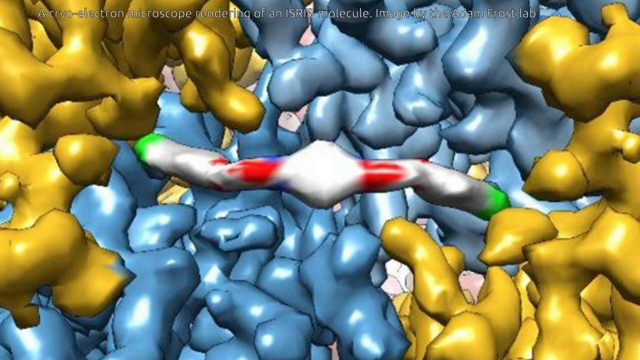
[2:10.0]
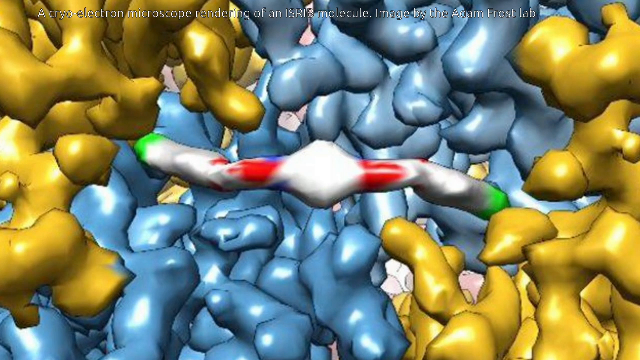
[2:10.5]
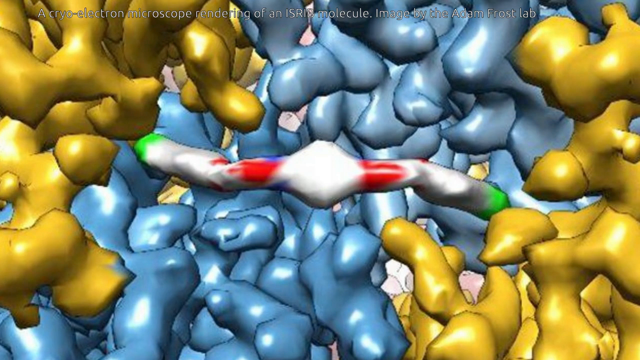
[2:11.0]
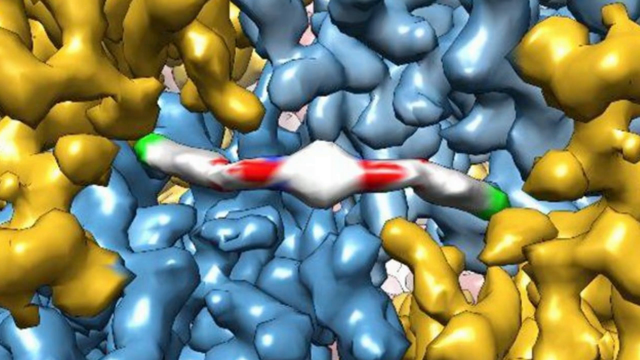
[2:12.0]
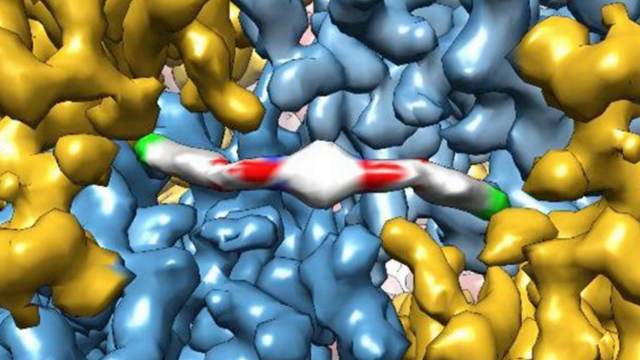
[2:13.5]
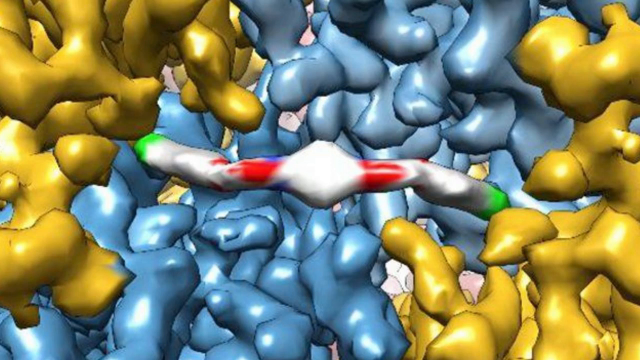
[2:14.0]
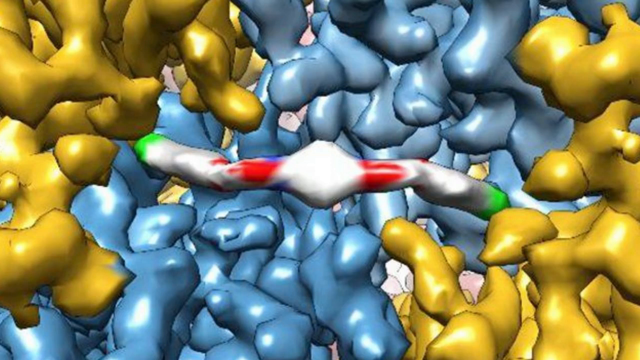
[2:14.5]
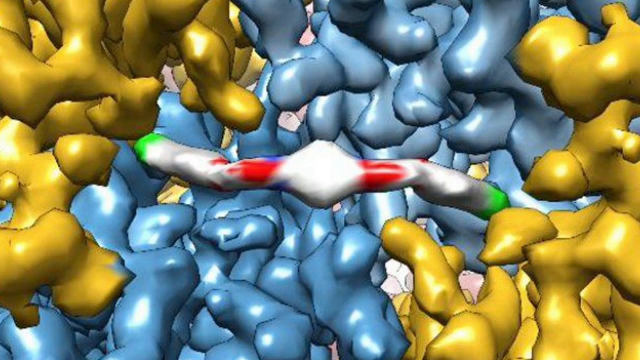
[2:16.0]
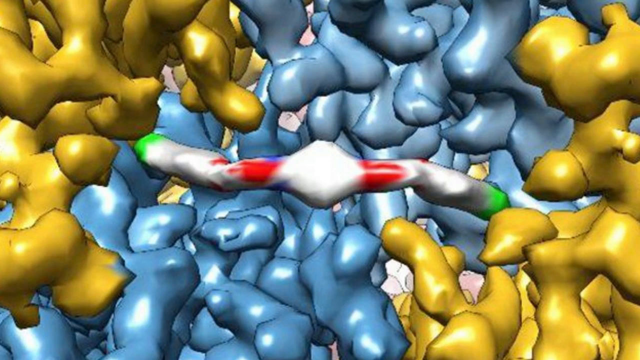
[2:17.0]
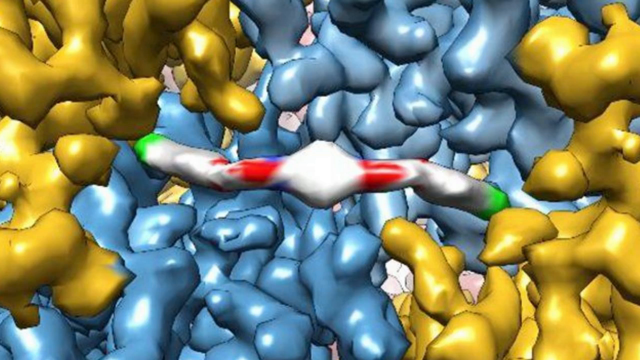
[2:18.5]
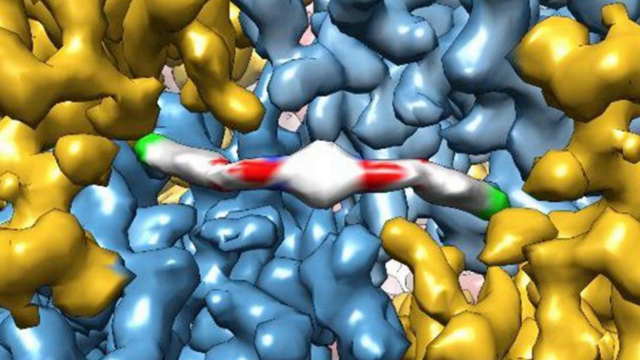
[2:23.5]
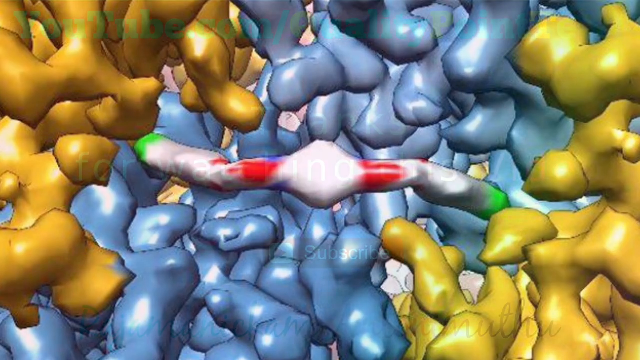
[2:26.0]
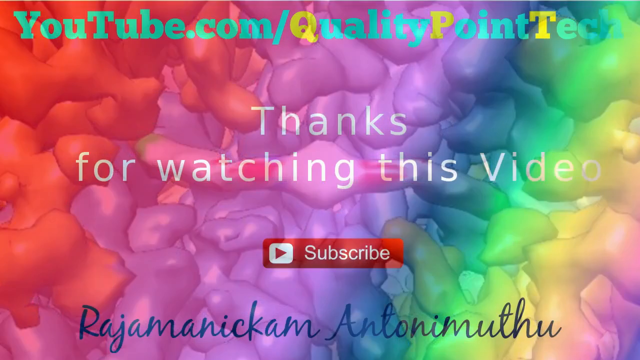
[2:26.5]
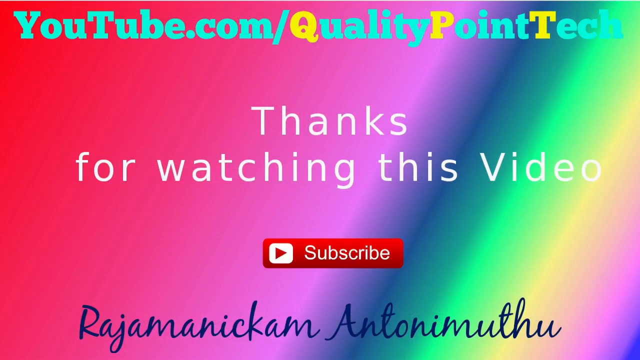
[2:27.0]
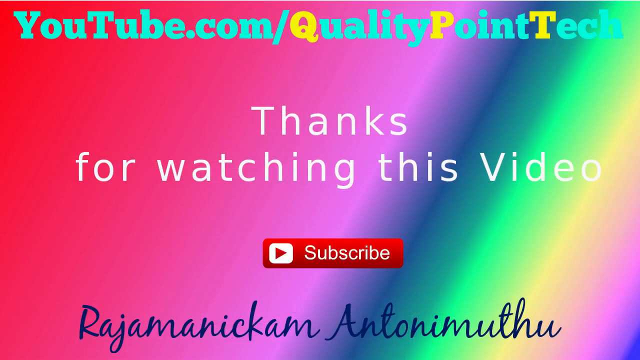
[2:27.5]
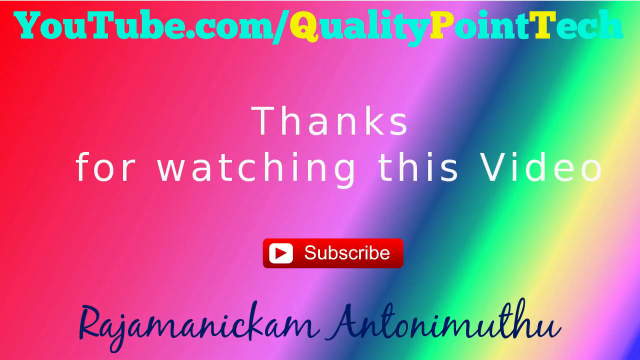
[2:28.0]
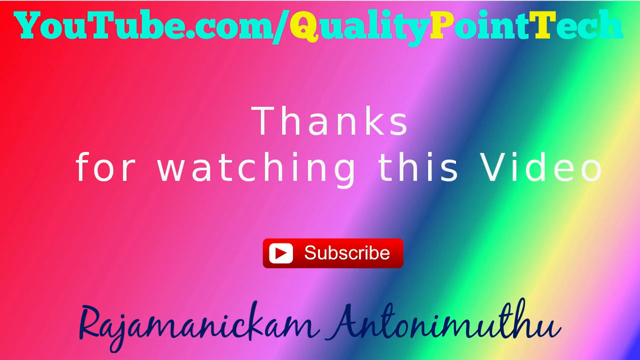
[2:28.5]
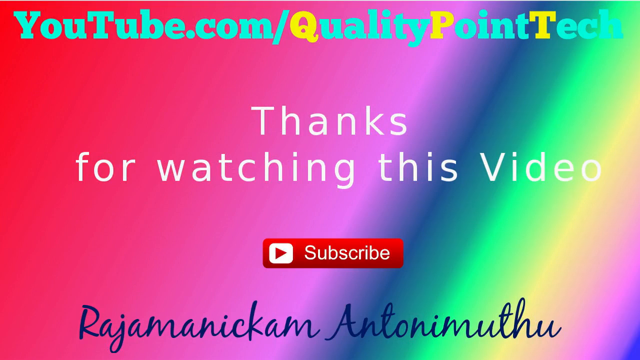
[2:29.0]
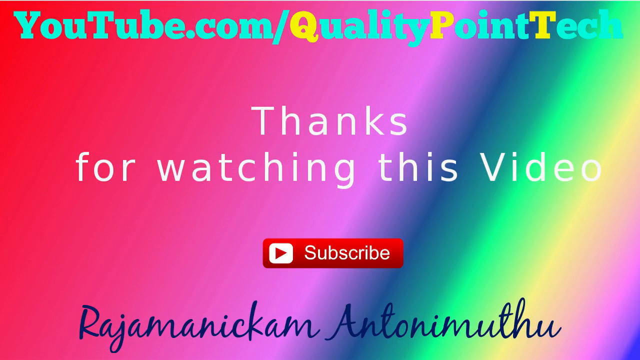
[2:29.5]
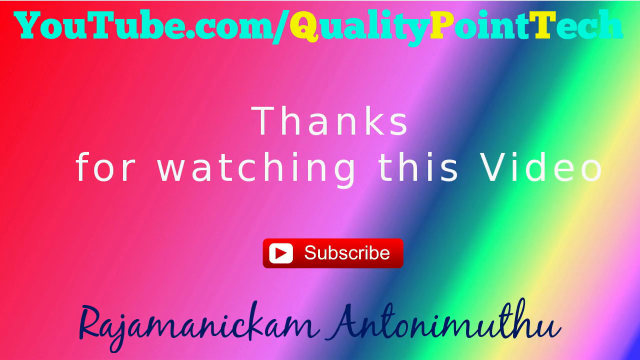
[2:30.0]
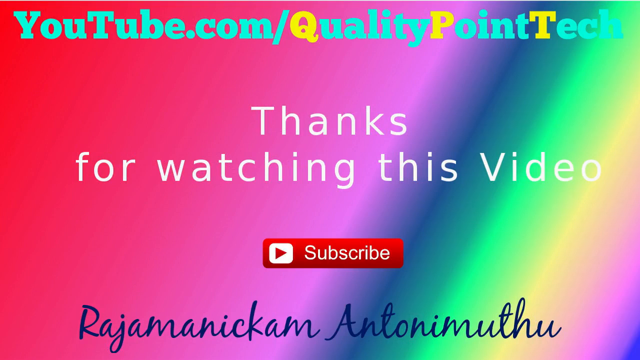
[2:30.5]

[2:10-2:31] The molecule microscope graphic is on screen, then the end credits appear. They have a very bright fuchsia-pink background with a bright, illuminated-looking rainbow running from the lower middle to the upper right corner, going from vibrant pink to blue, blue-green, green, yellow and pink. At the top, in aqua serif text, is "youtube.com\quality point tech", with the first letter of each word capitalized except .com, and the Q, P and T in yellow. Below it, in thin white sans serif text, are two lines: "Thanks" and "for watching this Video". Underneath is a red Subscribe button with white text and, inside the box to its left, the YouTube logo: a white square with a red arrow pointing right. At the bottom is a name in dark blue cursive handwriting, possibly "Rajamanickam Antonimuthu".